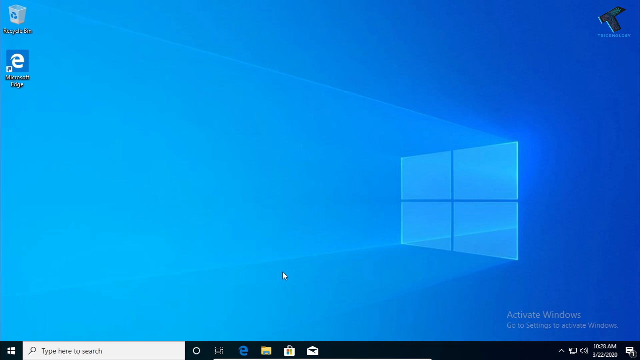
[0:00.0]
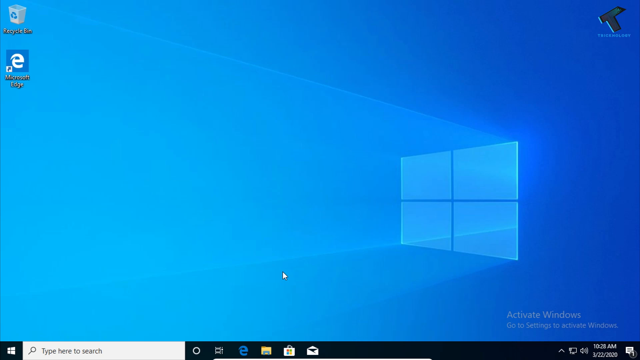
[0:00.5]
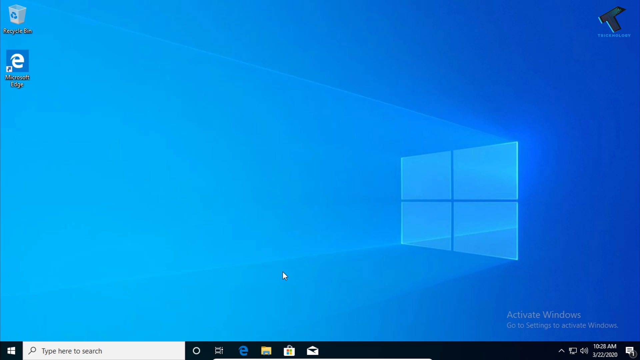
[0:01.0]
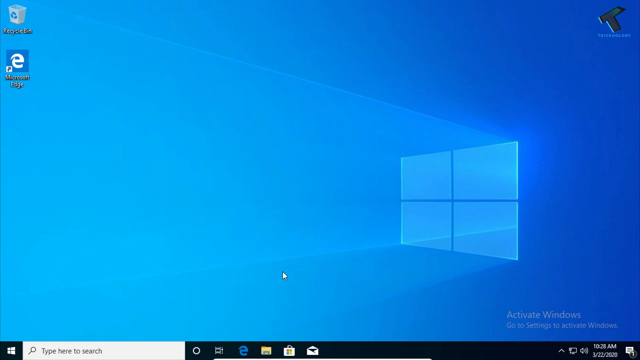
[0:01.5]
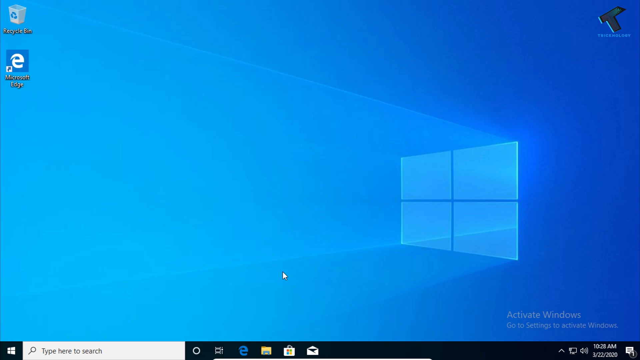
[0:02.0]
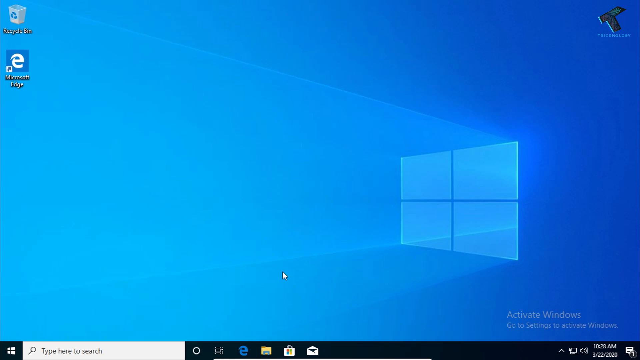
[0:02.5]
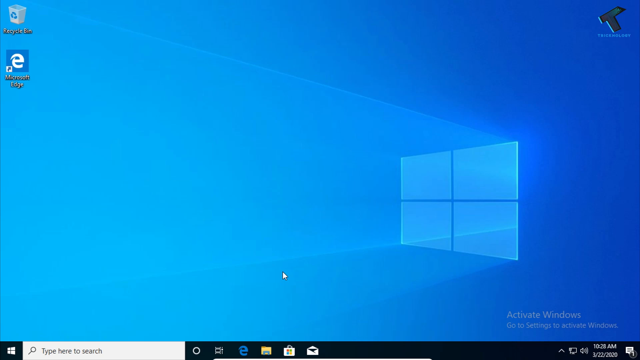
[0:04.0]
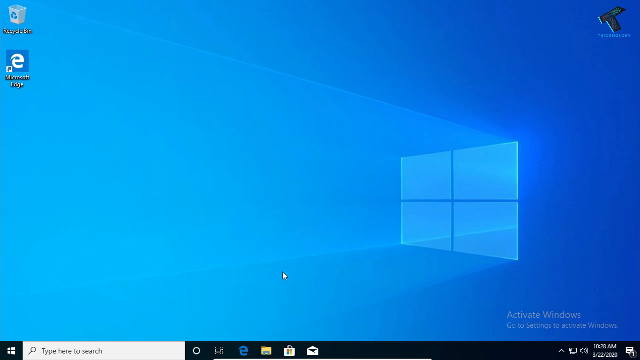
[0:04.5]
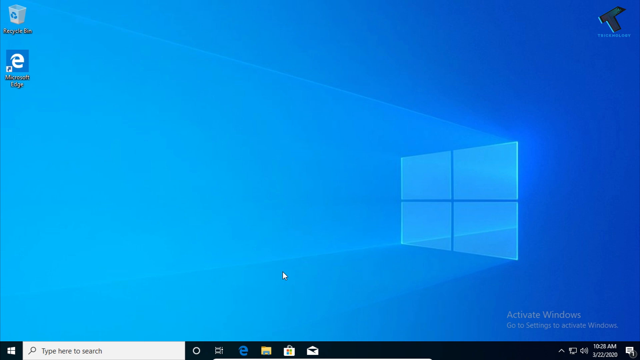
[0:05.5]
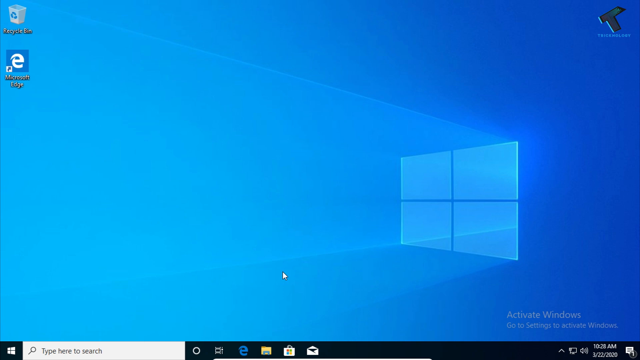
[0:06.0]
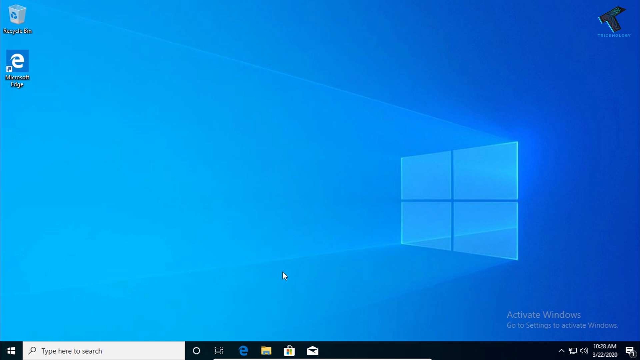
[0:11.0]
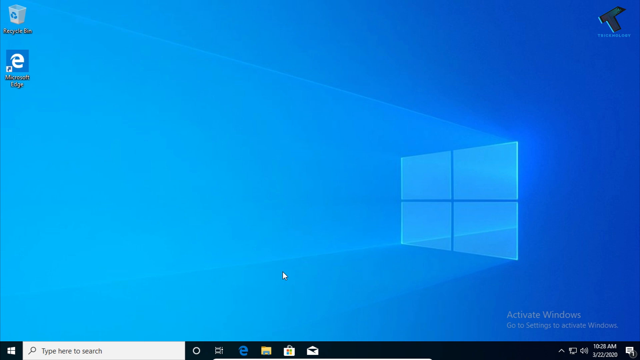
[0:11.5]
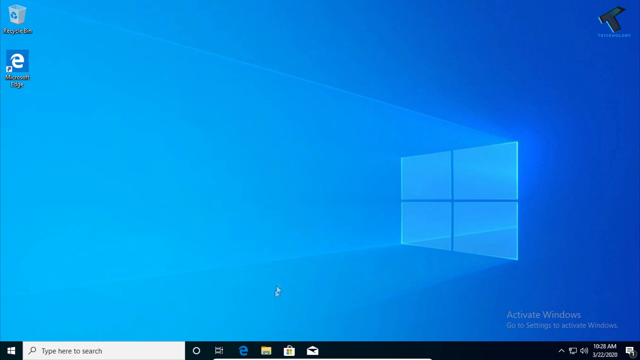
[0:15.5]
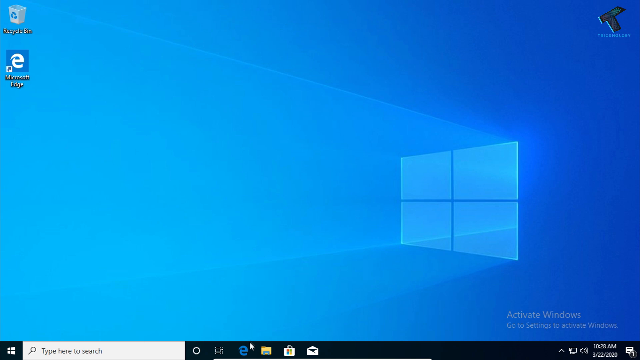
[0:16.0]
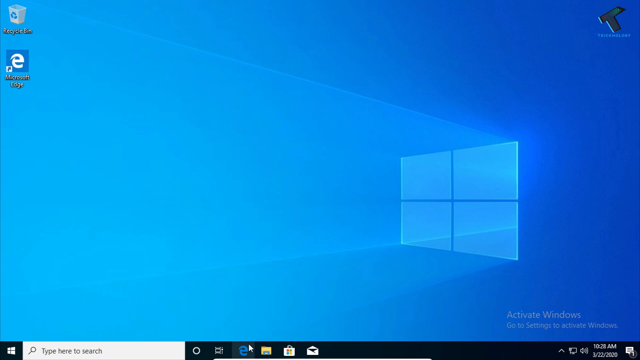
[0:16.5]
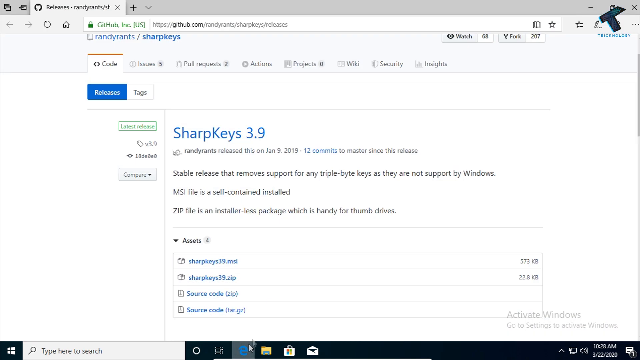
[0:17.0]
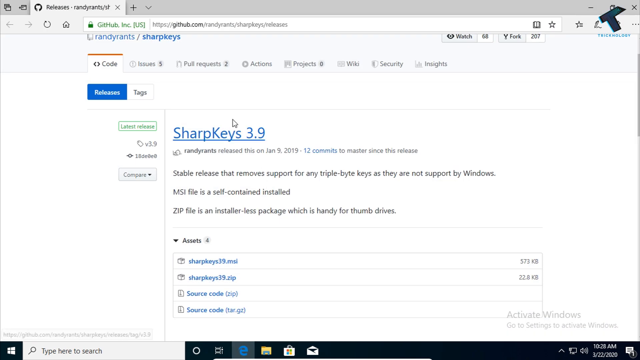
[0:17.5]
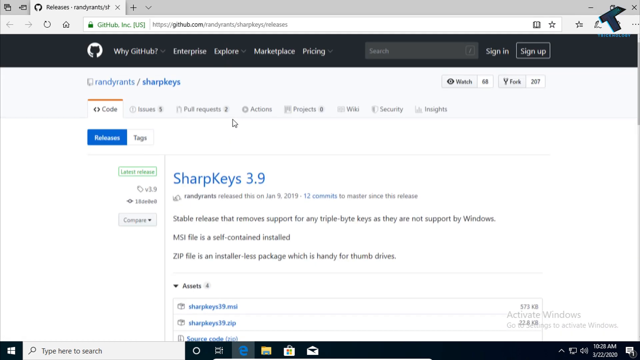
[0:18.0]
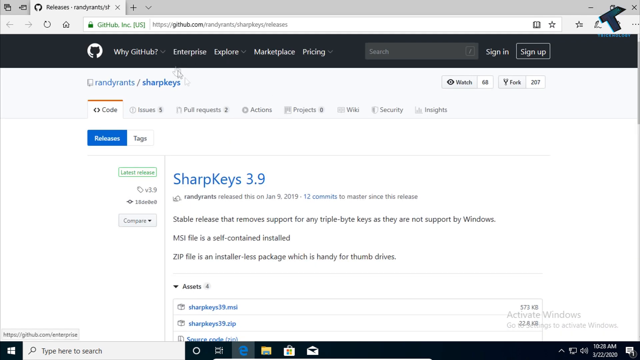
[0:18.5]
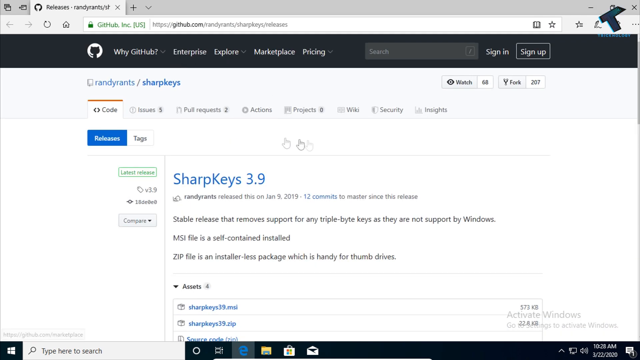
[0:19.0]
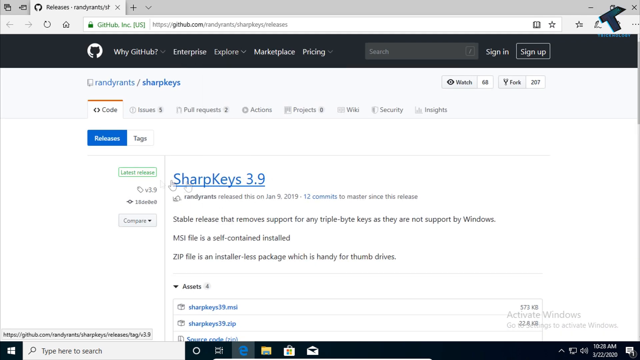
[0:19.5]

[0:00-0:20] A computer desktop appears first: a fairly empty screen with a blue background and the Windows logo, which looks like it has light shining through it. It seems to be a very basic wallpaper, and the only icons on the desktop are Recycle Bin and Microsoft Edge. A page then opens, apparently GitHub. At the top are coding exercises and options for code, issues, pull requests, actions, projects, wiki, security and insights. Below, text reads "SharpKeys 3.9" followed by "Stable release that removes support for any triple byte keys as they are not supported by Windows. MSI file is a self-contained installed" and a line describing an "installer-less package, which is handy for thumb drives."